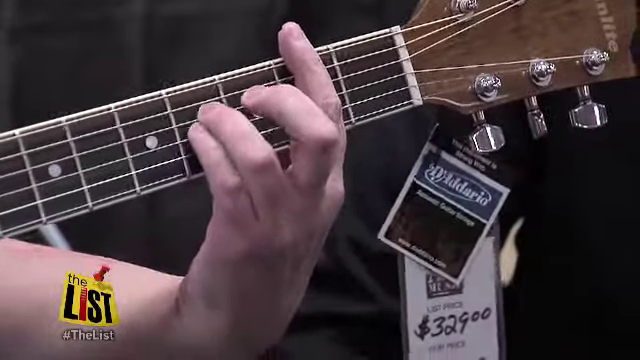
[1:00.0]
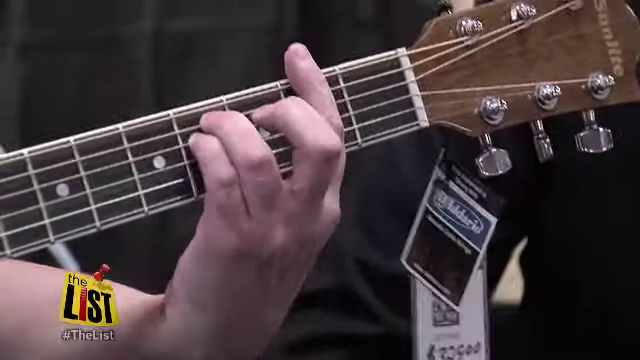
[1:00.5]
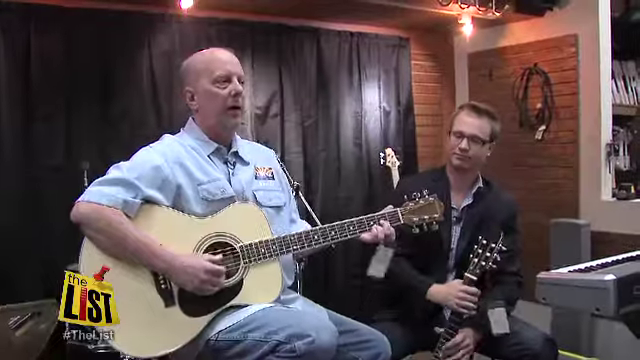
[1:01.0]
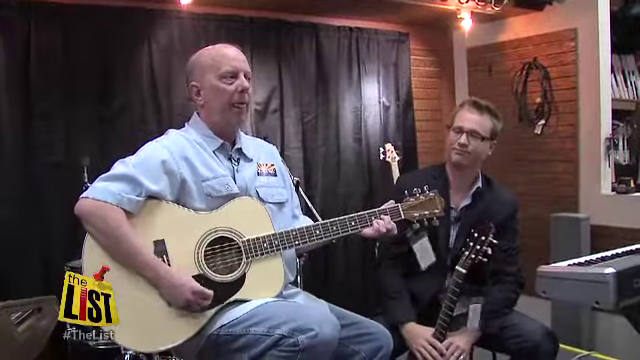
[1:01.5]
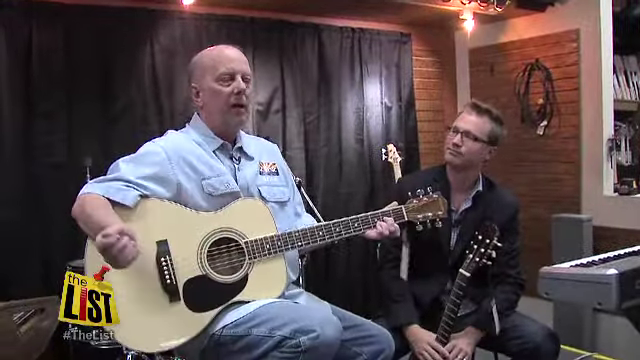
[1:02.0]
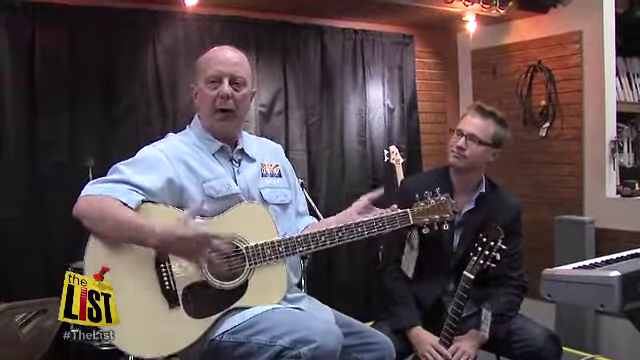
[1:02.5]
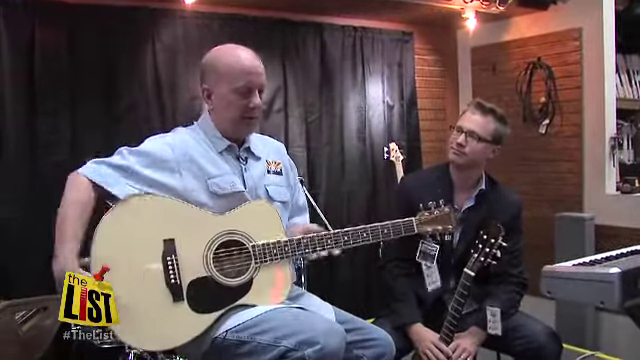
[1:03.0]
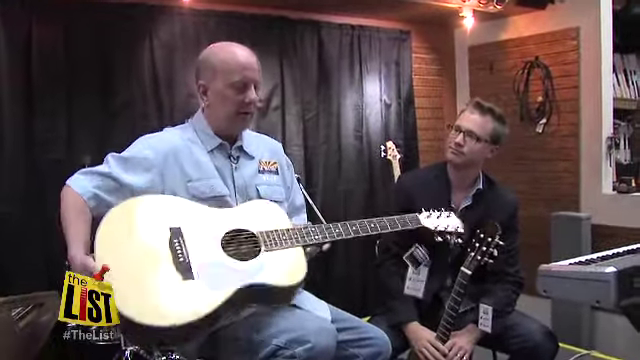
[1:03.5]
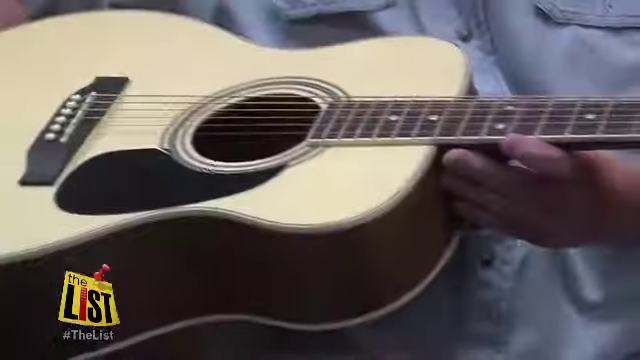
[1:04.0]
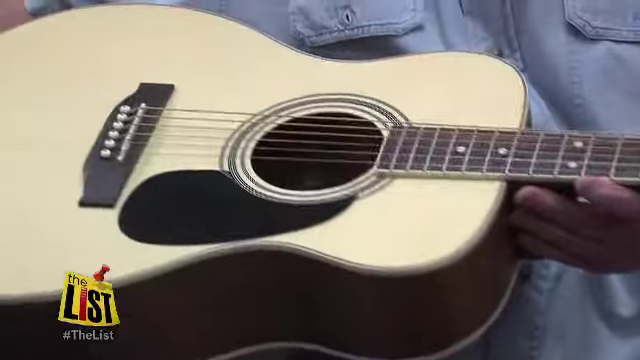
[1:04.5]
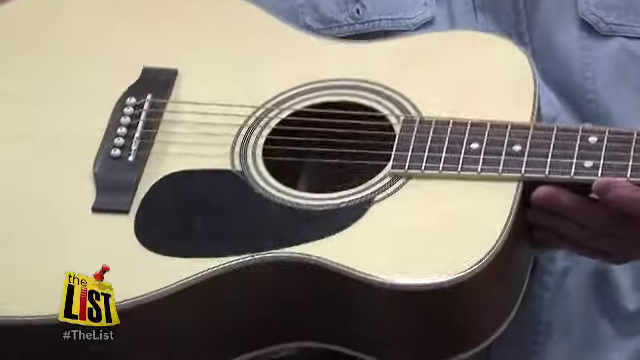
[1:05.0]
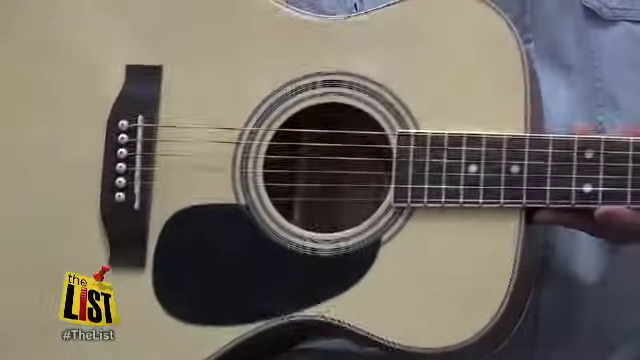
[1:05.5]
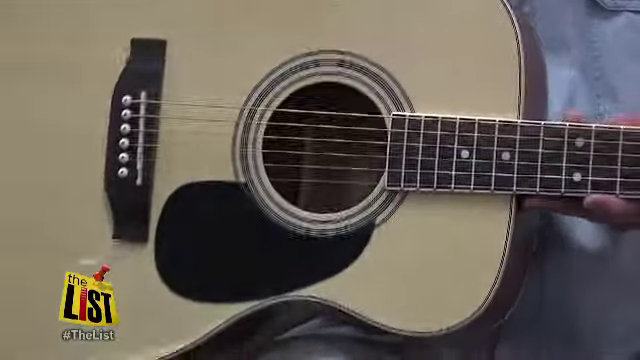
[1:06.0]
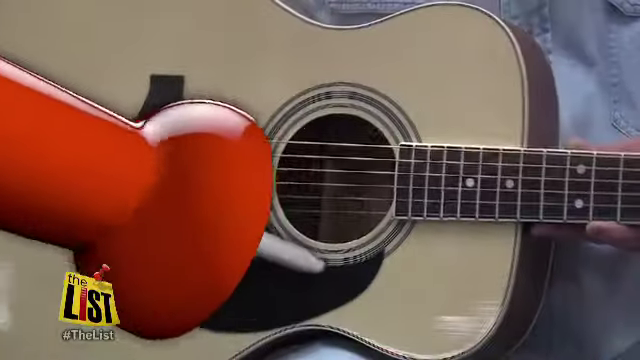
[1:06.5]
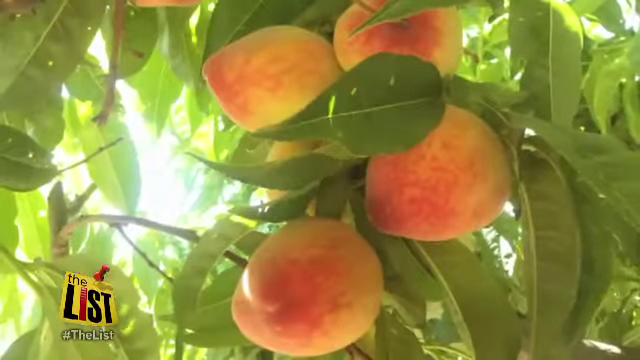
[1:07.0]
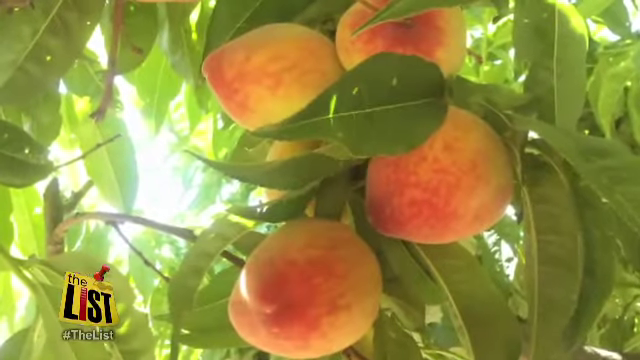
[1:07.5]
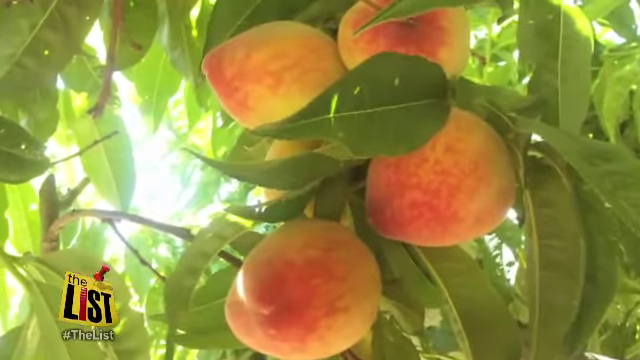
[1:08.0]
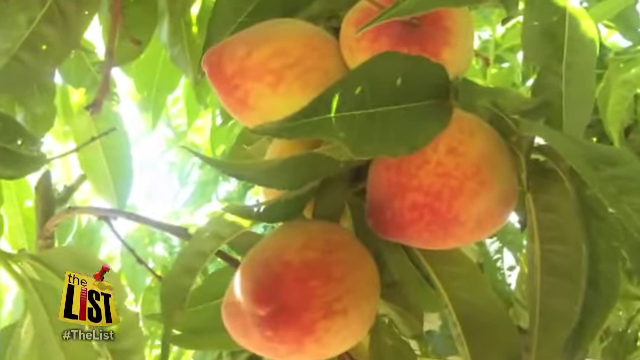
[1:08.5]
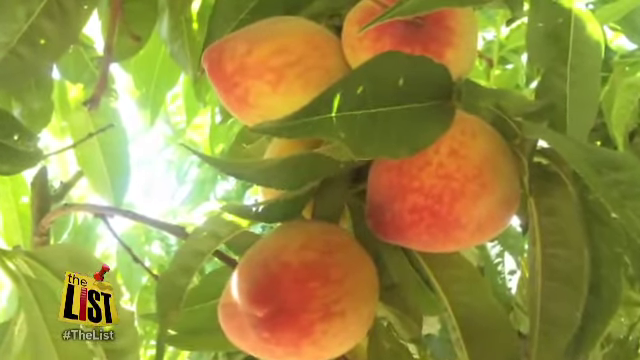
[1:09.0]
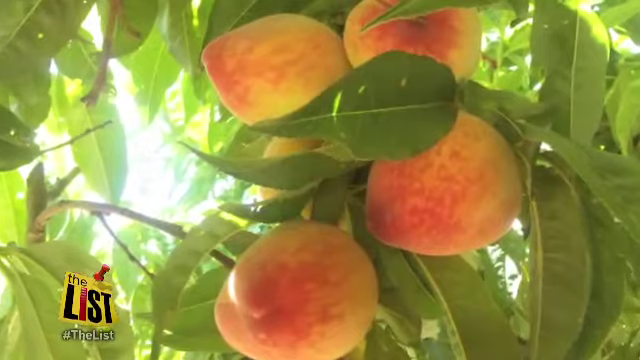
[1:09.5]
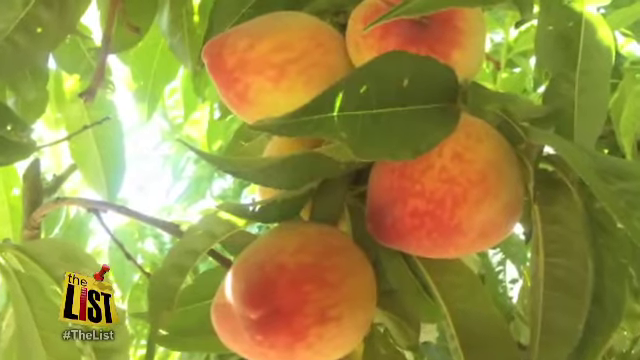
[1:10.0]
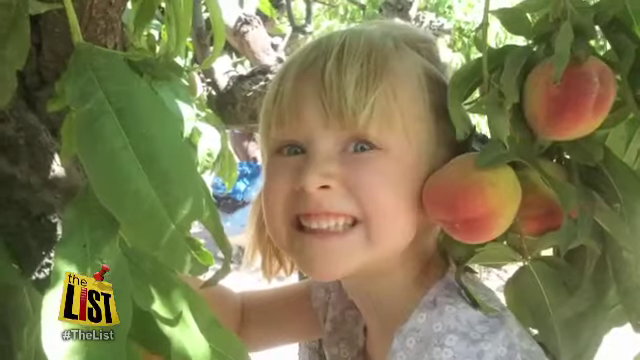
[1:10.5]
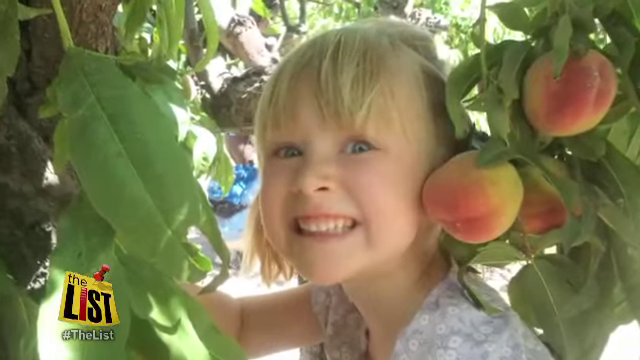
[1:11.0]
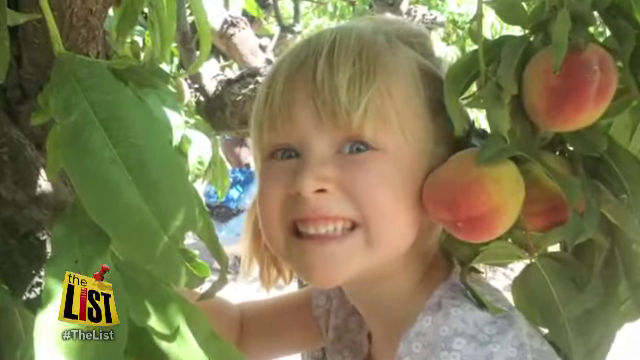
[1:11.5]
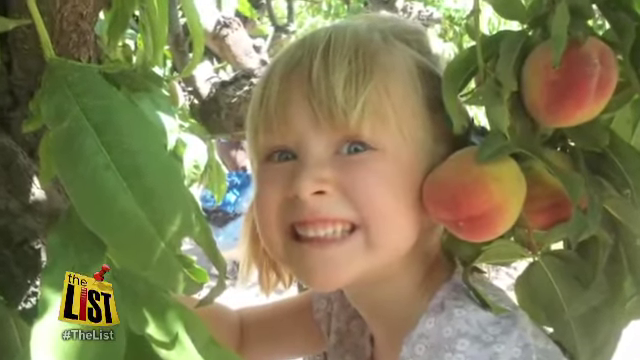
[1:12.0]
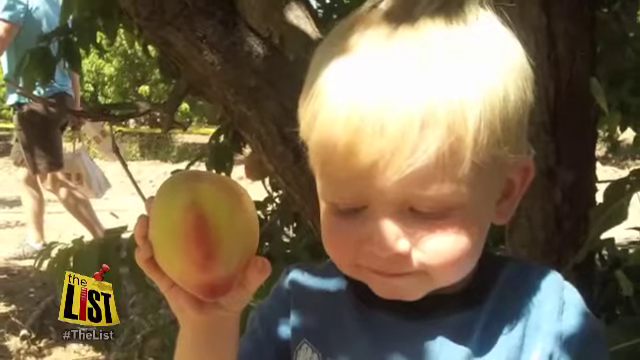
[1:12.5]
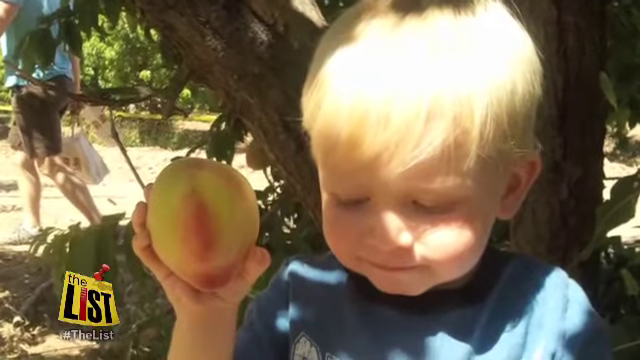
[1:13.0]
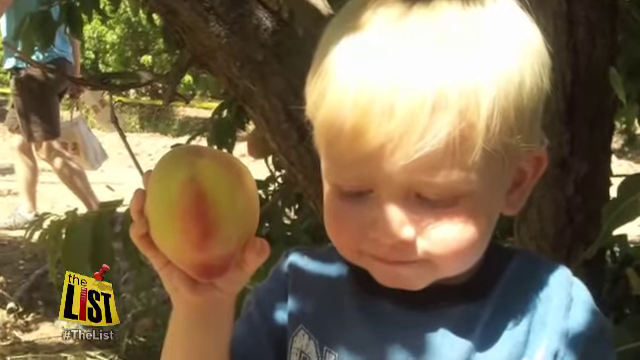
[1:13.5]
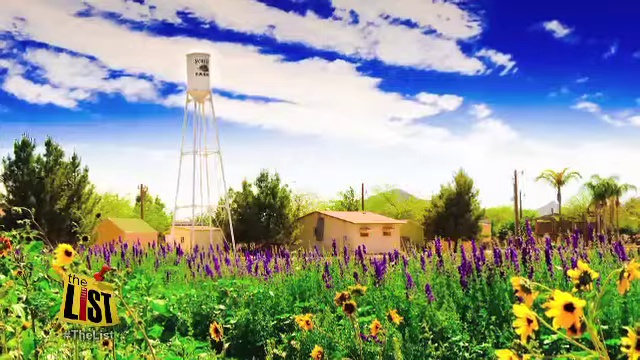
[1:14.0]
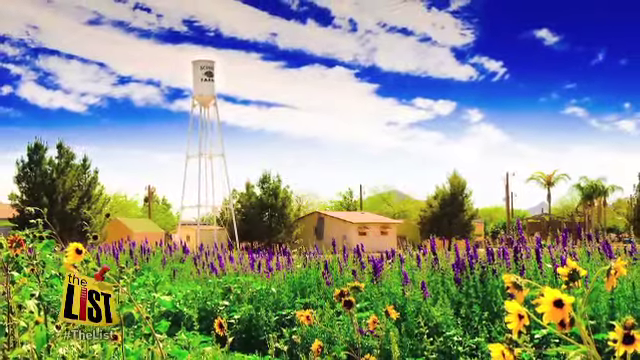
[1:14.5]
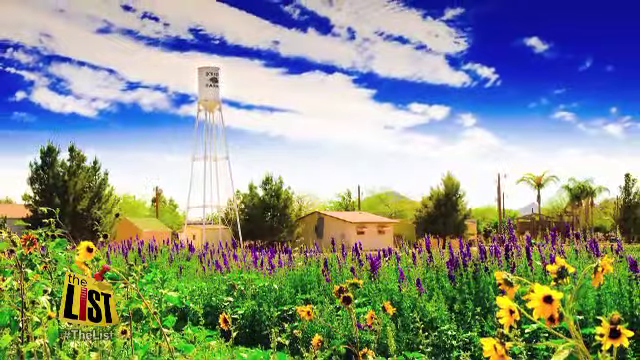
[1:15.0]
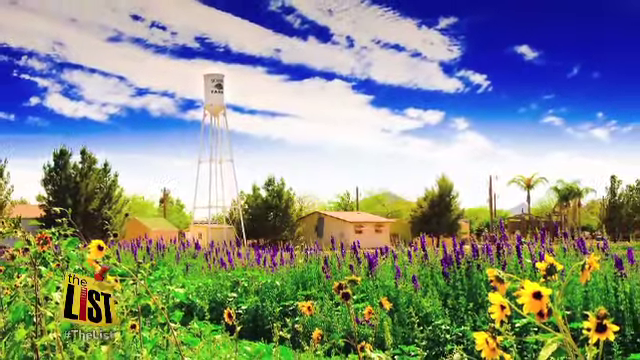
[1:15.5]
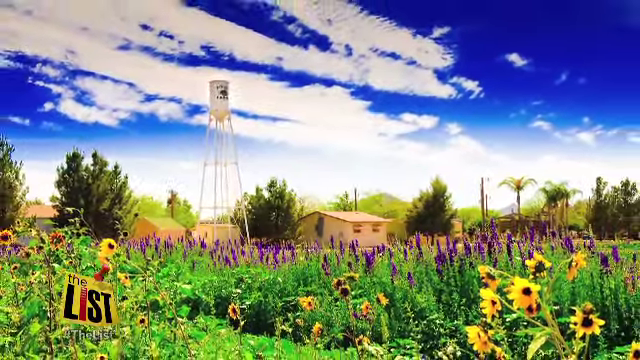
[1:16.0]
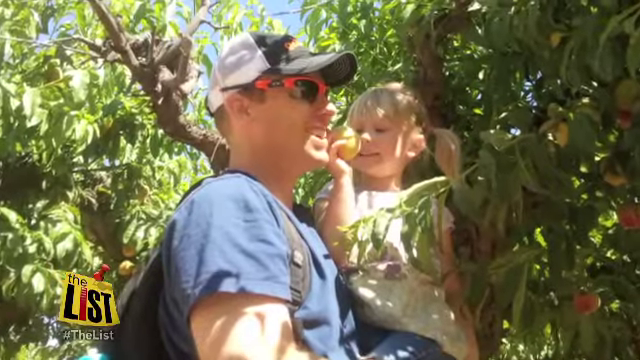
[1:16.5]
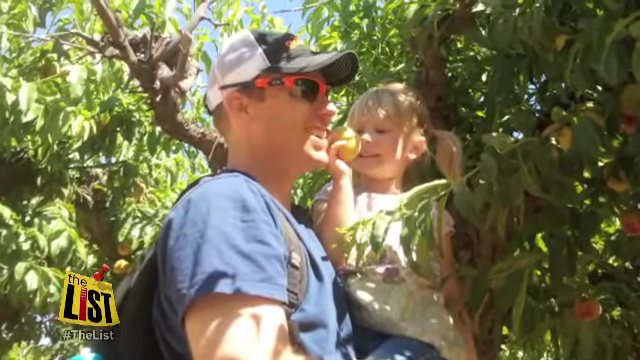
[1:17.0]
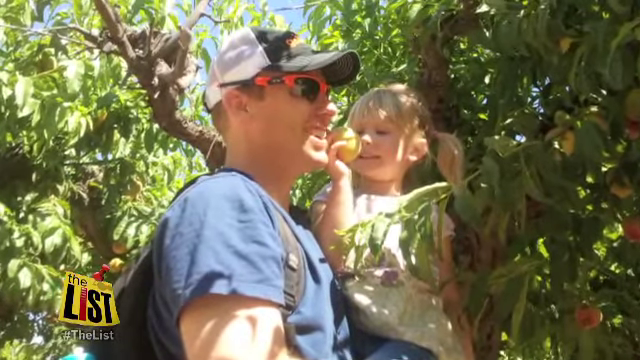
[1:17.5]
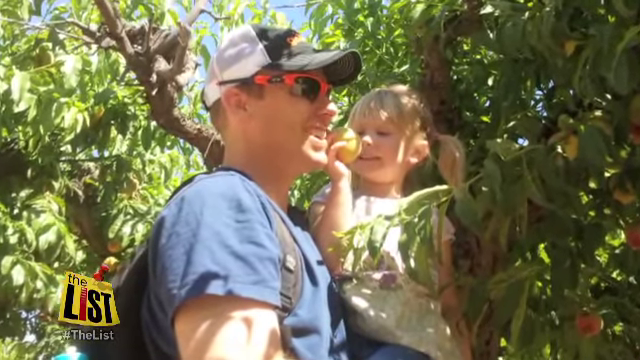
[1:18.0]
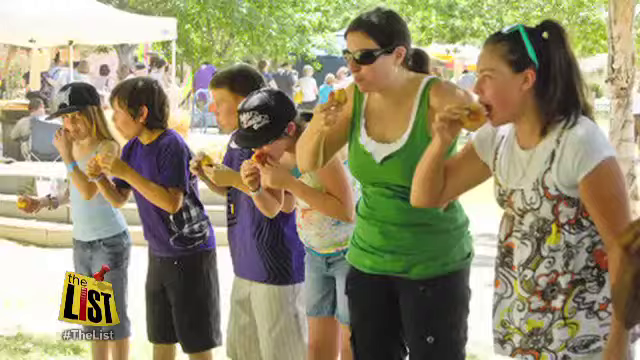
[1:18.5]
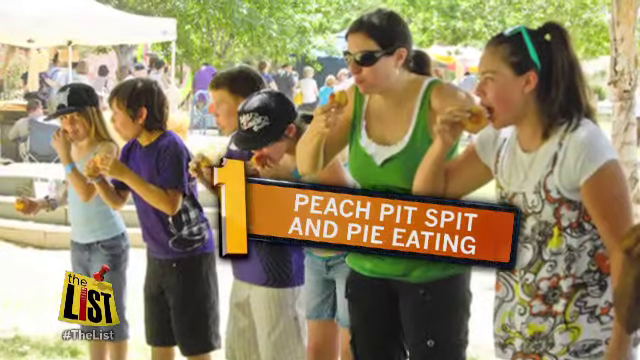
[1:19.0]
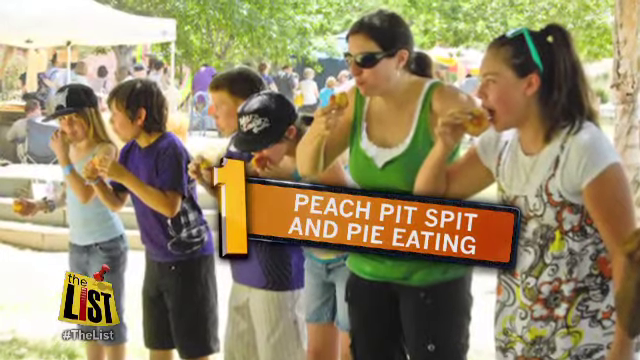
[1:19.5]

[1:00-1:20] A man's hand grips the arm of a guitar, with the strings running horizontally across it. The hand is Caucasian and is strumming. The camera backs up to show a man in the music store playing the guitar himself; it is an acoustic guitar. To the right of the guitar player is the man doing the interview, the host of the show, also Caucasian, looking at the guitar player. The List logo is in the lower left corner. The camera then zooms in again close up on the guitar. The scene suddenly switches to an outdoor close-up of a peach tree: a group of nearly ripe peaches hangs off a green and brown branch with leaves that are somewhat pointy at the ends and rounded at the bottom. Sunlight comes through, and then a close-up shows a young girl and a young boy holding peaches.